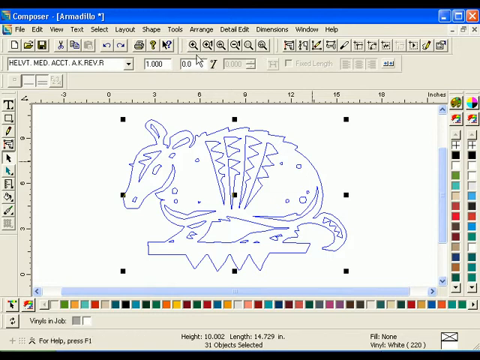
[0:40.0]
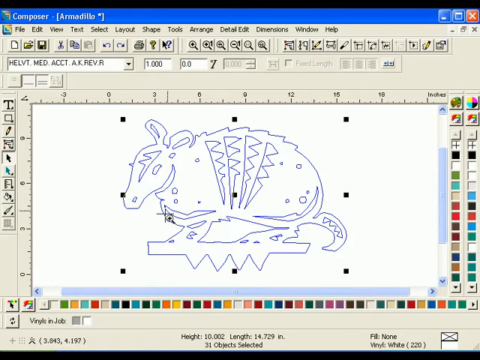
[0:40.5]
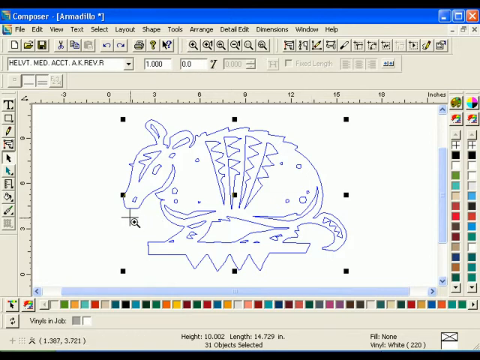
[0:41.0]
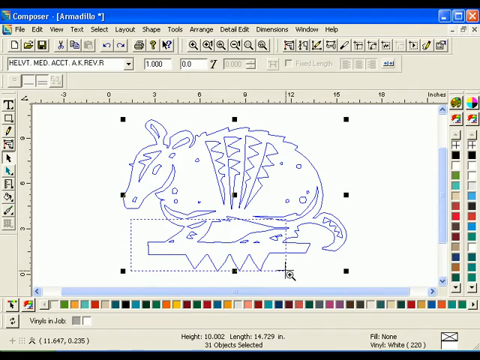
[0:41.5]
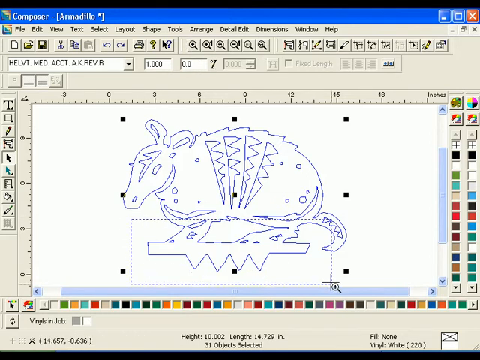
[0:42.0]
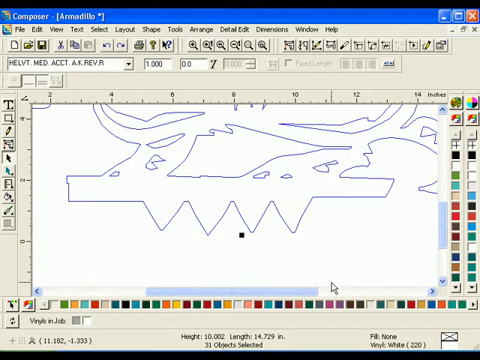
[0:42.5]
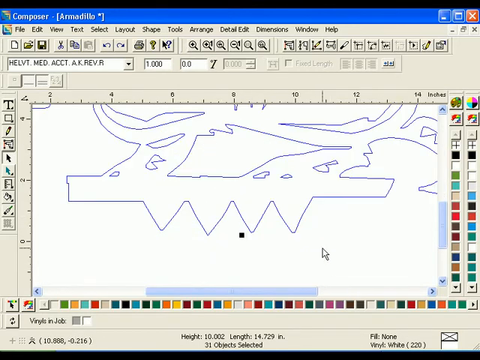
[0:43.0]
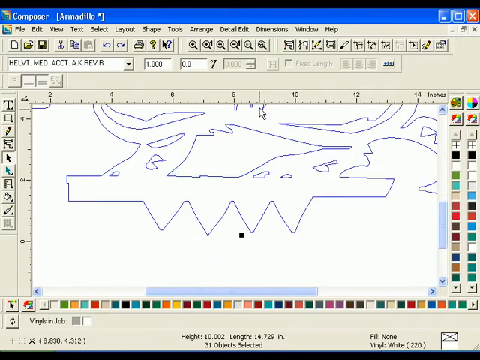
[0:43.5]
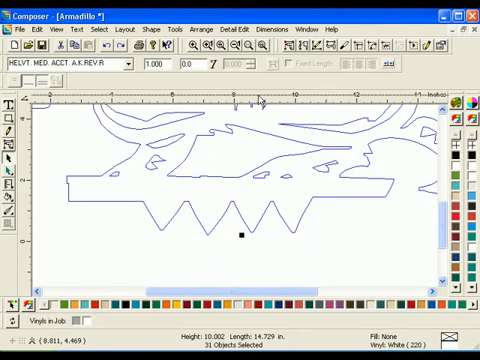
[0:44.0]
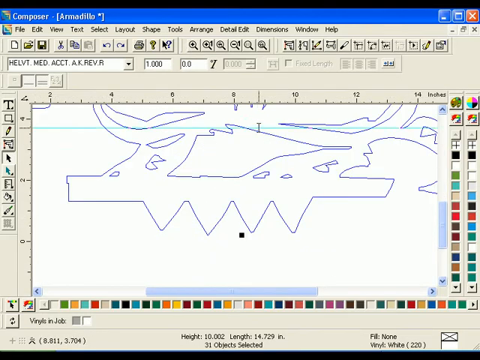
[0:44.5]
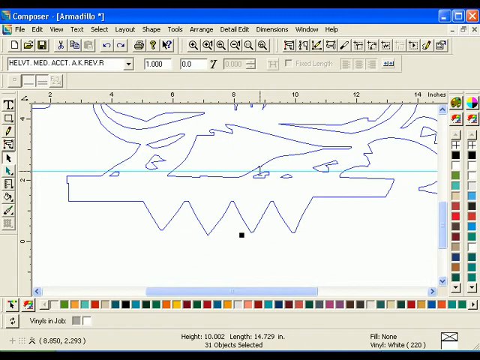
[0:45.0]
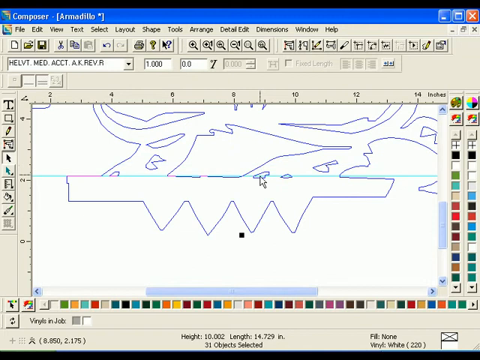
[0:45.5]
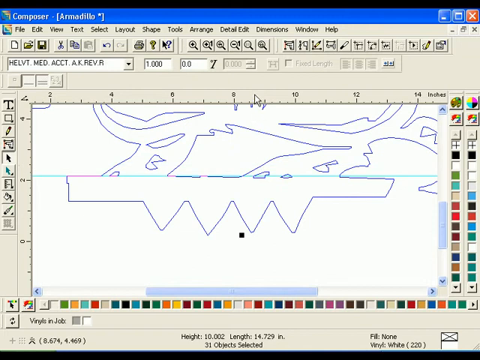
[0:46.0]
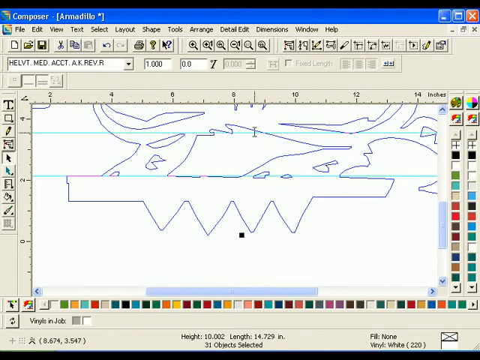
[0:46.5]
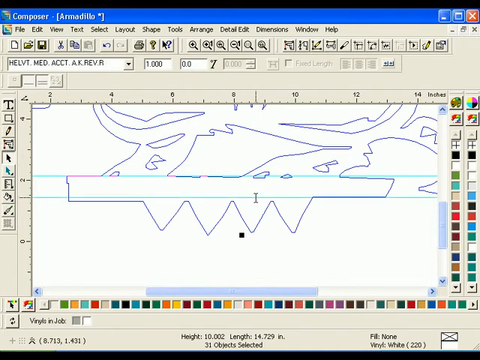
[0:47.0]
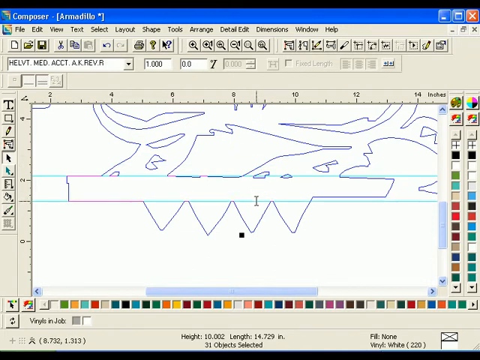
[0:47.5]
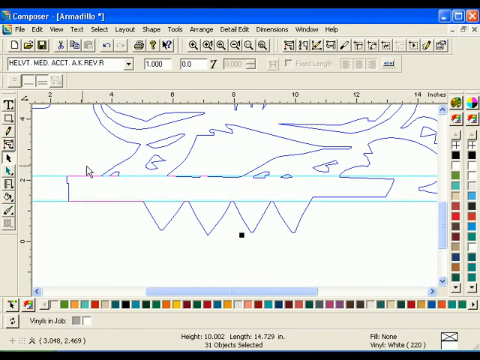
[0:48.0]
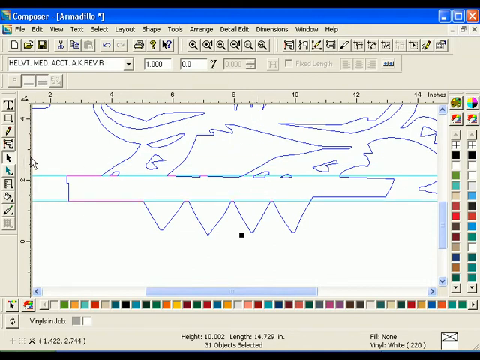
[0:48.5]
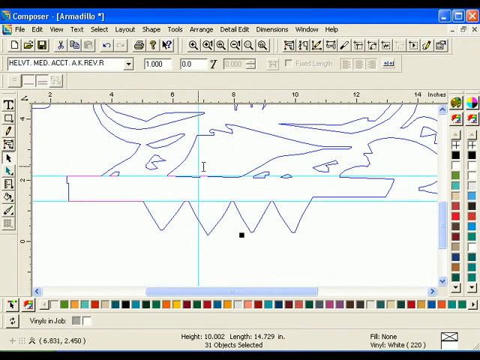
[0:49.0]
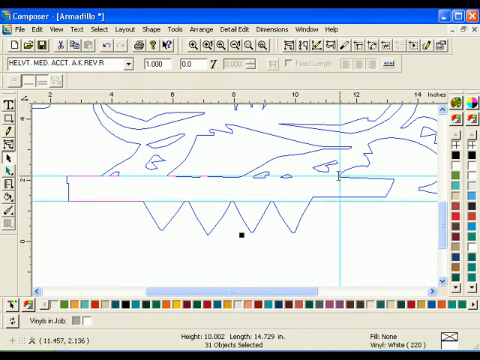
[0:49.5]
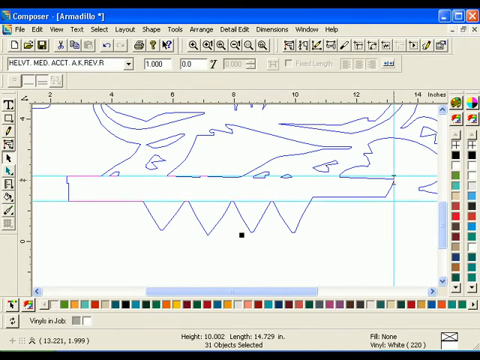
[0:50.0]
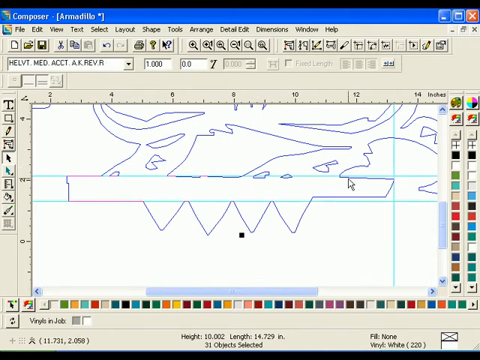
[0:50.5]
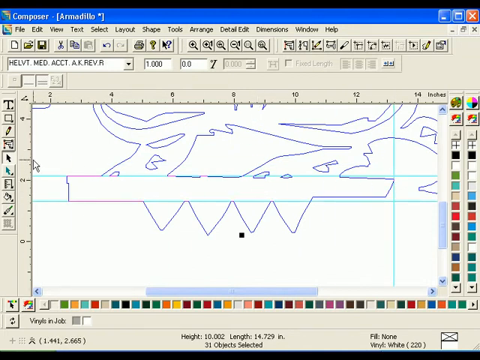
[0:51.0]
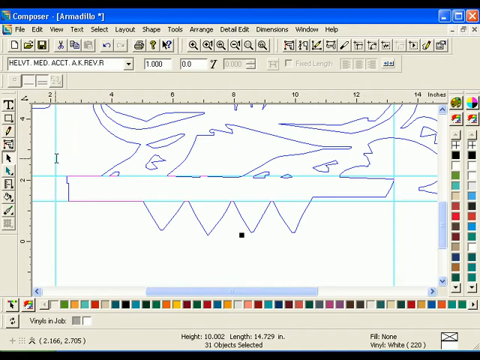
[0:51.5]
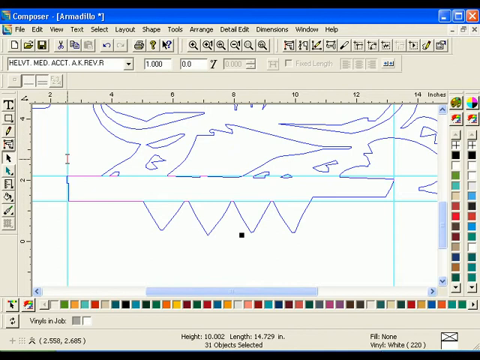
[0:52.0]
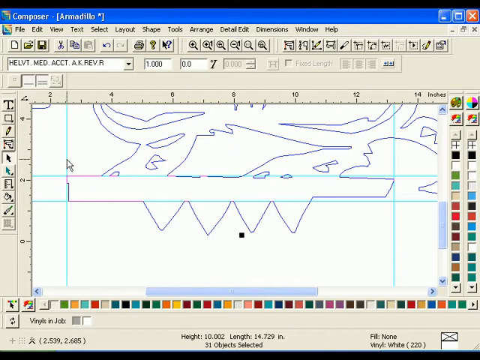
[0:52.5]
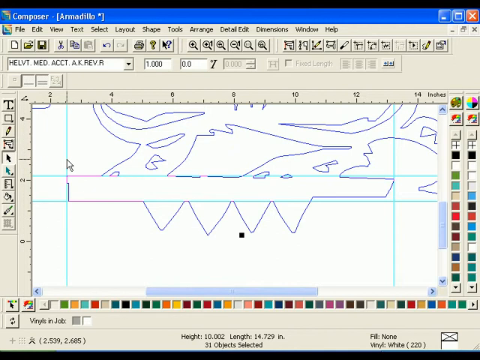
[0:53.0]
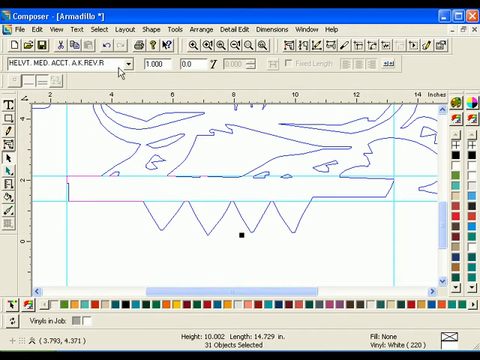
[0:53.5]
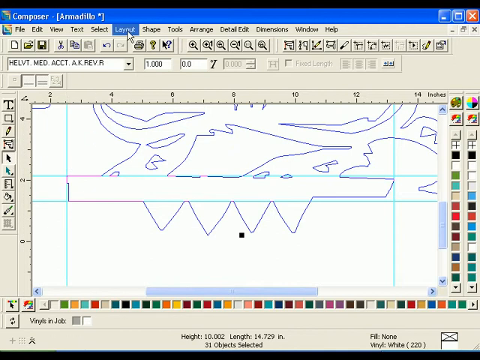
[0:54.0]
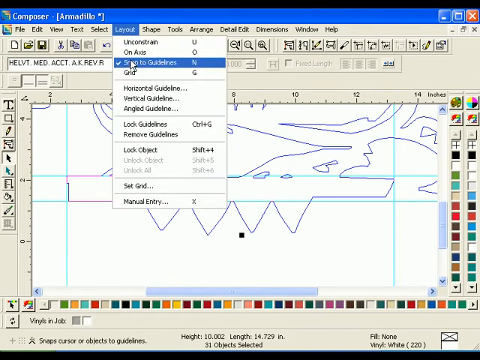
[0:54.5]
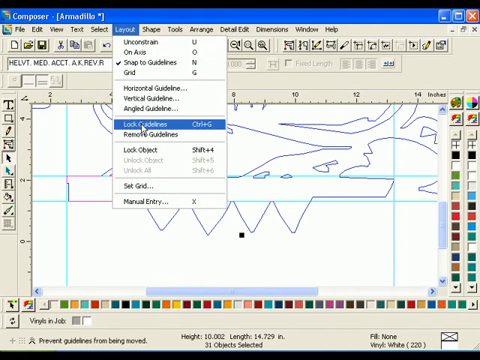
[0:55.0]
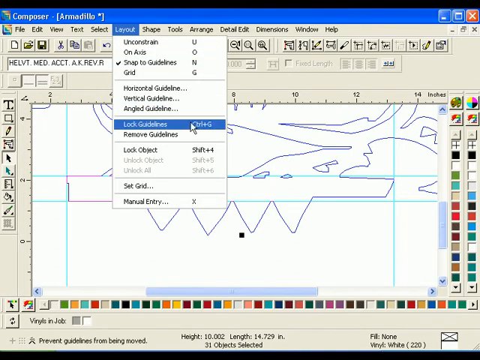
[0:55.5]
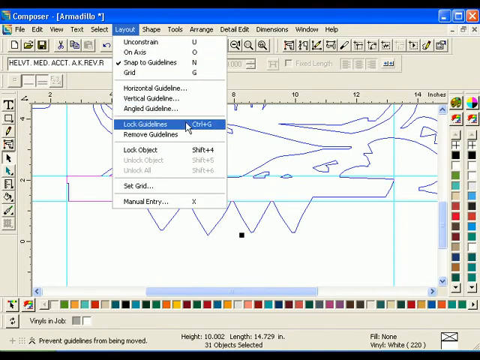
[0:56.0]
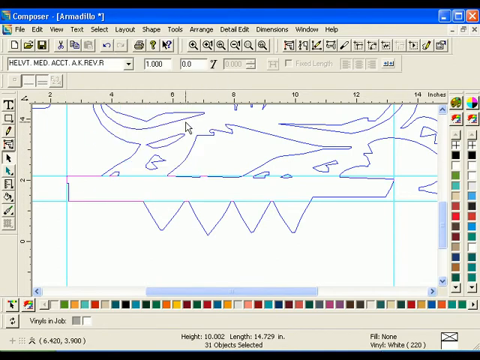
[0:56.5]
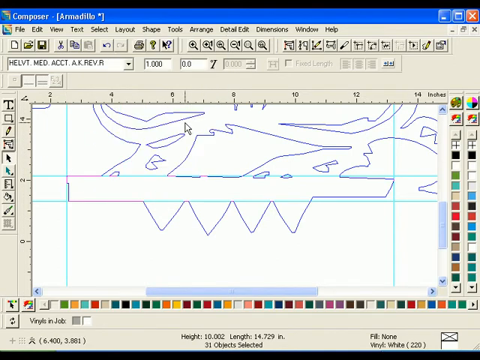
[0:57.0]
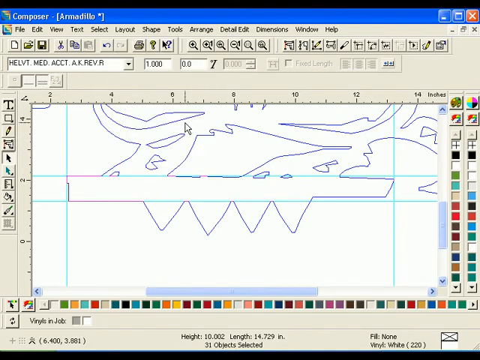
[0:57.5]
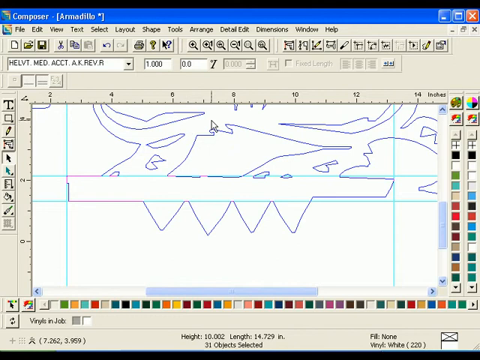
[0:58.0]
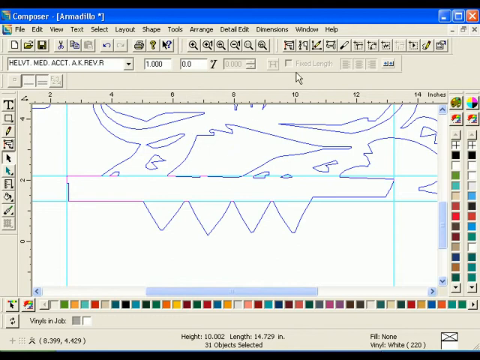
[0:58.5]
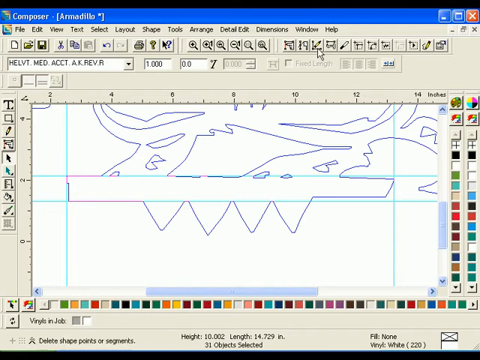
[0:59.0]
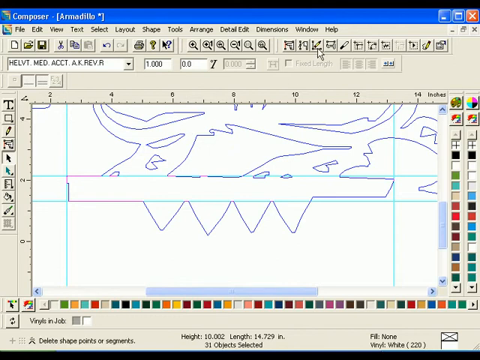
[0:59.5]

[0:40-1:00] The application, which looks sort of like a paint application but is not, shows a white canvas in the center with a blue line picture of an armadillo facing left. White text at the top left reads "composer" and then, in brackets, "armadillo." The menu at the top reads "file, edit, view, text, select, layout, shape, tools, arrange, detail, edit, dimensions, window, and help," and there appear to be many tool buttons at the top. On the right and bottom are many different colored square icons. The mouse cursor highlights the bottom of the armadillo, where there is a base with four upside-down triangles, creating a dotted rectangle around the base, and the view zooms in on the area the mouse dragged. The white cursor then drags down from the top border of the white canvas, creating a teal horizontal line, and places it level with the top of the base the armadillo stands on. It drags another line from the top down to the bottom of the base, then drags from the left side all the way to the right tip of the base, and another from the left side to the left tip of the base, marking the top, bottom, left and right edges of the base. The mouse then opens the Layout menu and clicks what appears to be "lock guidelines, control G." It then moves up and hovers over a toolbar button that looks like "delete (E)," whose icon looks like a right angle with a pencil pointing at it.